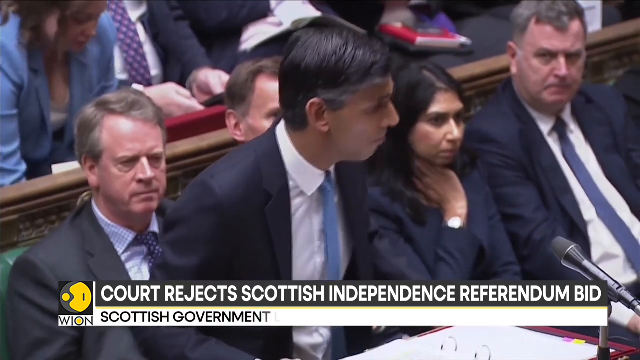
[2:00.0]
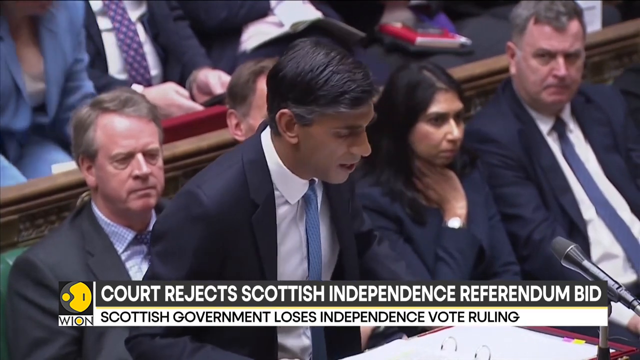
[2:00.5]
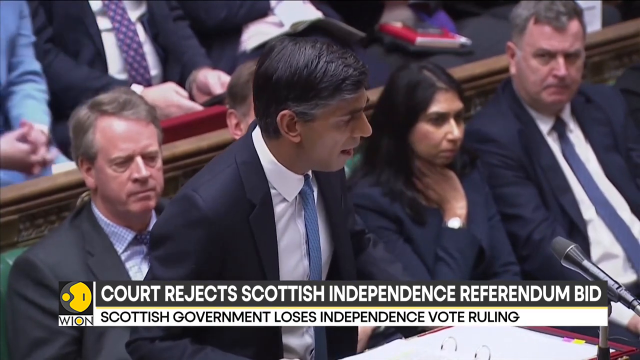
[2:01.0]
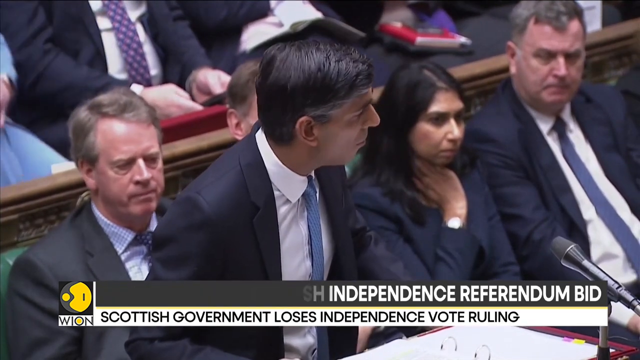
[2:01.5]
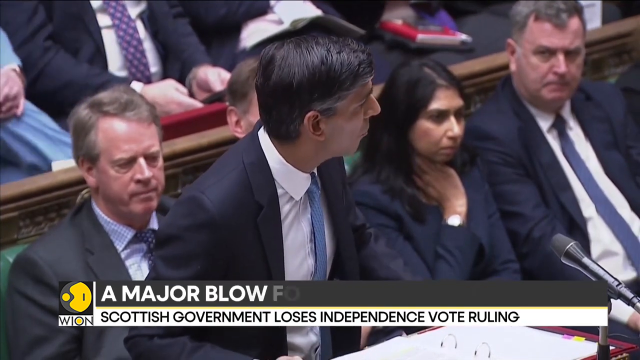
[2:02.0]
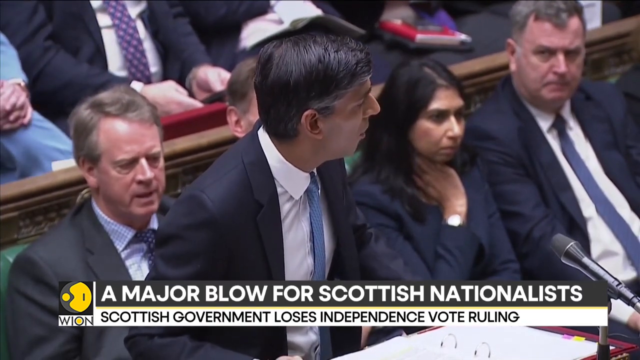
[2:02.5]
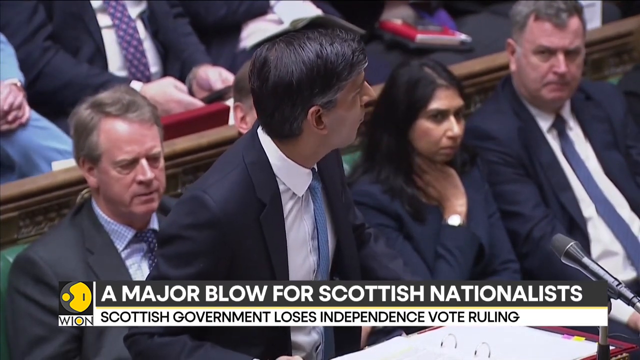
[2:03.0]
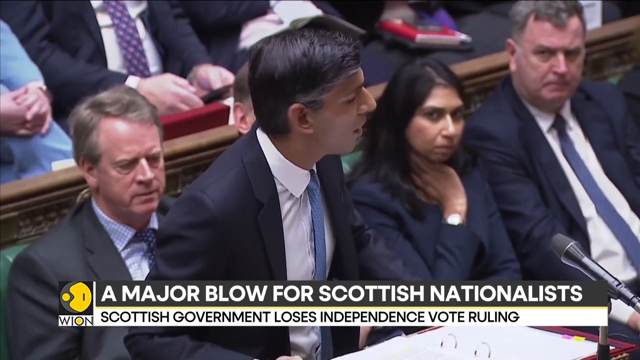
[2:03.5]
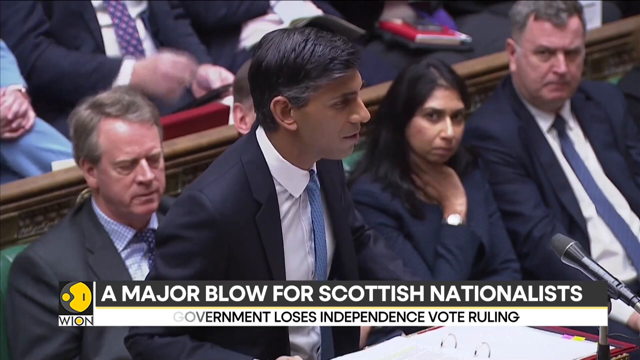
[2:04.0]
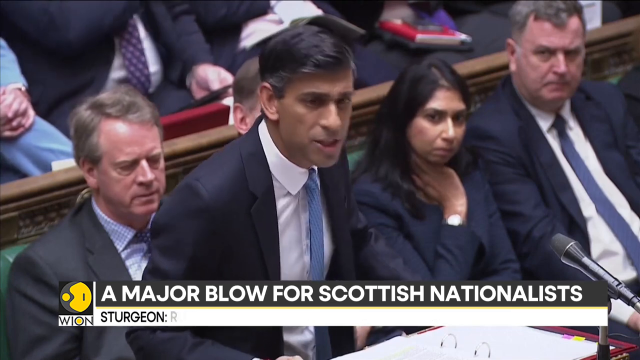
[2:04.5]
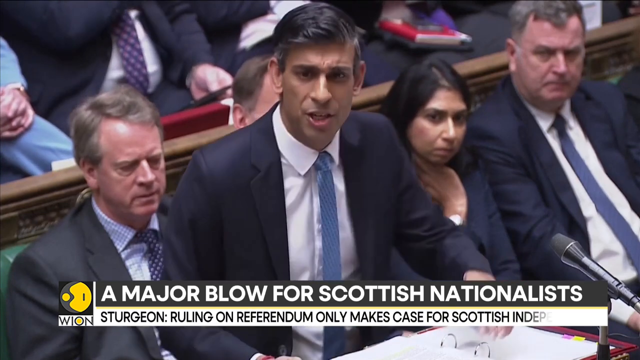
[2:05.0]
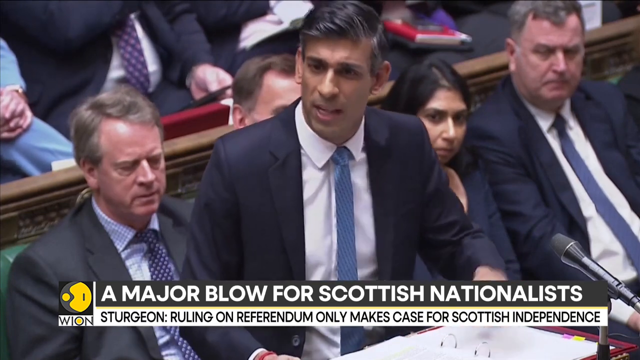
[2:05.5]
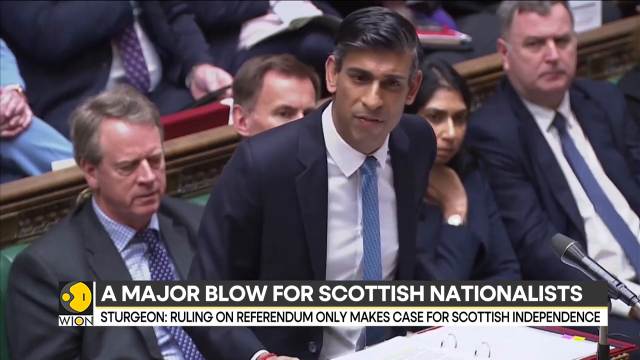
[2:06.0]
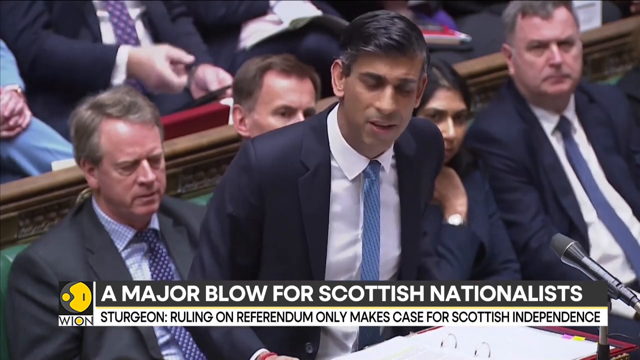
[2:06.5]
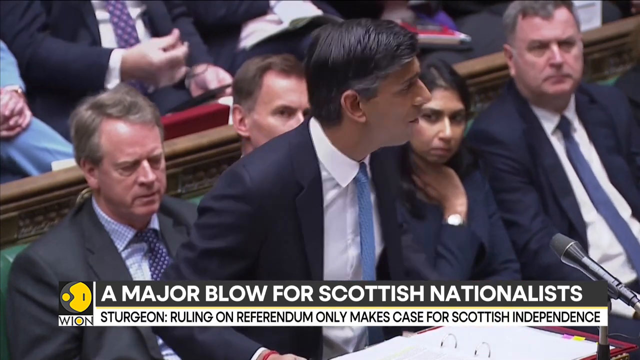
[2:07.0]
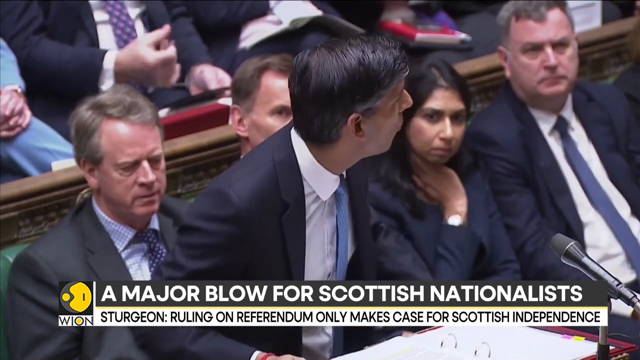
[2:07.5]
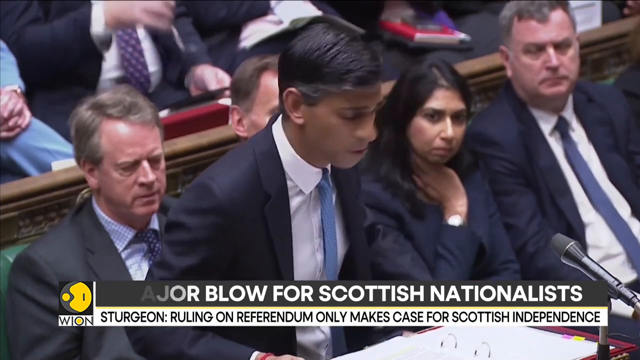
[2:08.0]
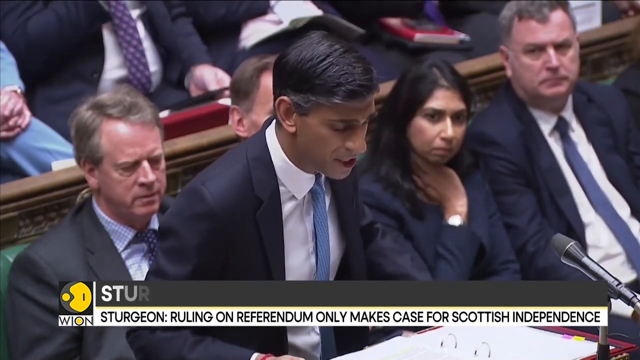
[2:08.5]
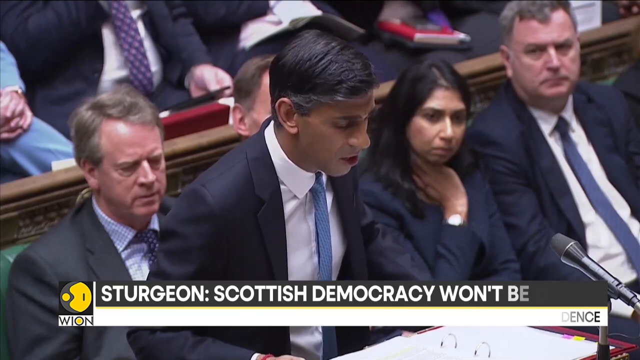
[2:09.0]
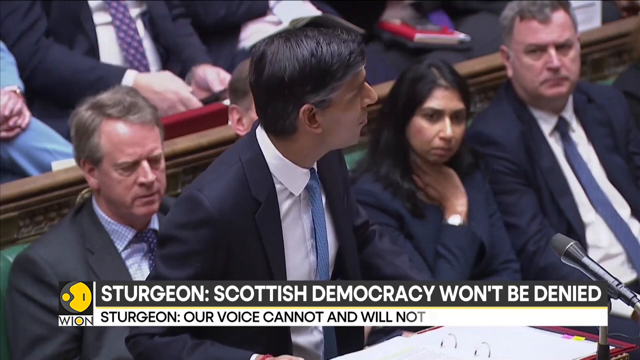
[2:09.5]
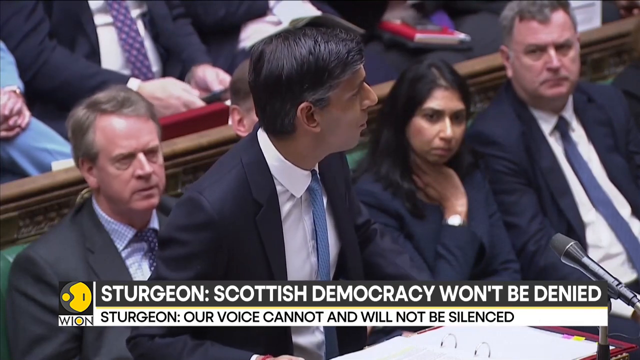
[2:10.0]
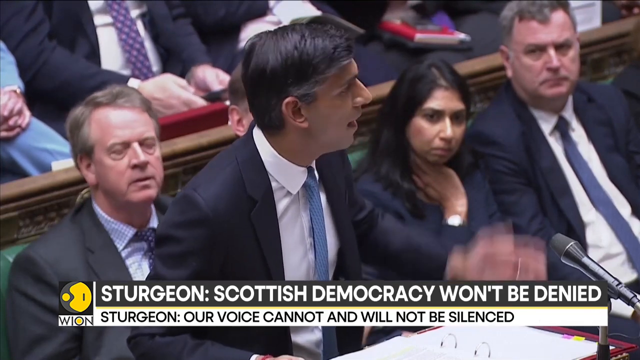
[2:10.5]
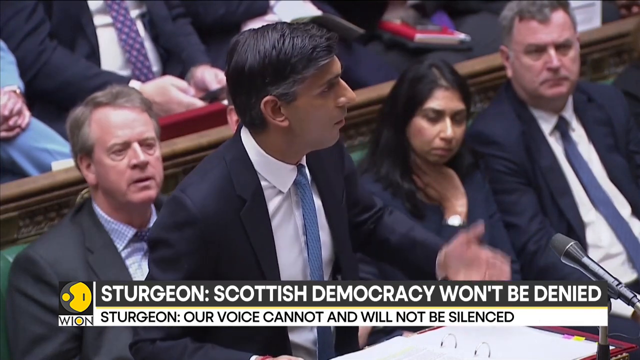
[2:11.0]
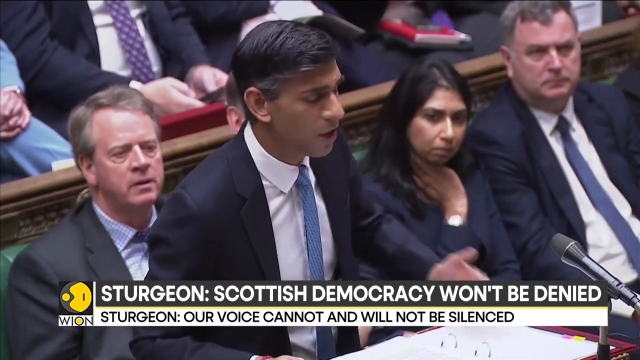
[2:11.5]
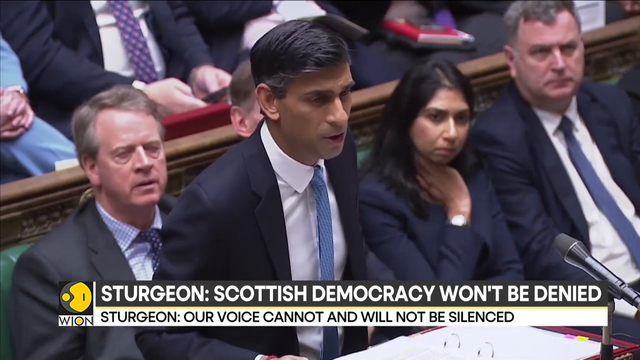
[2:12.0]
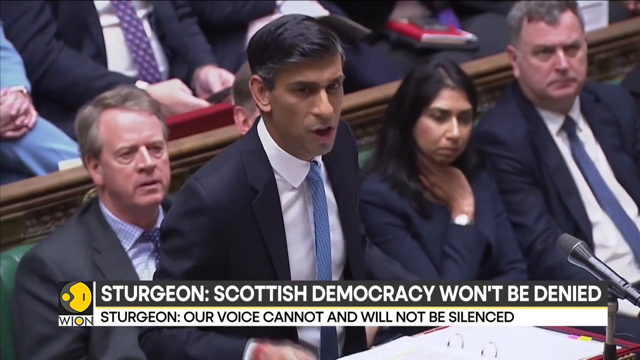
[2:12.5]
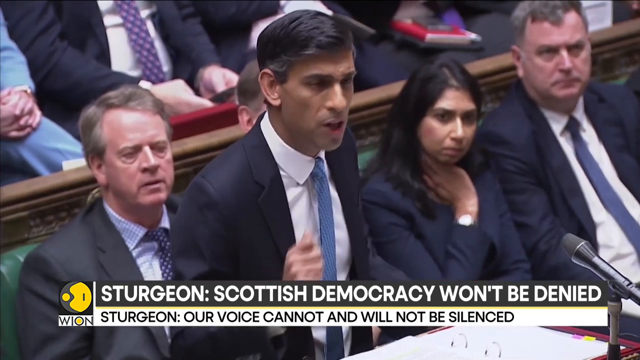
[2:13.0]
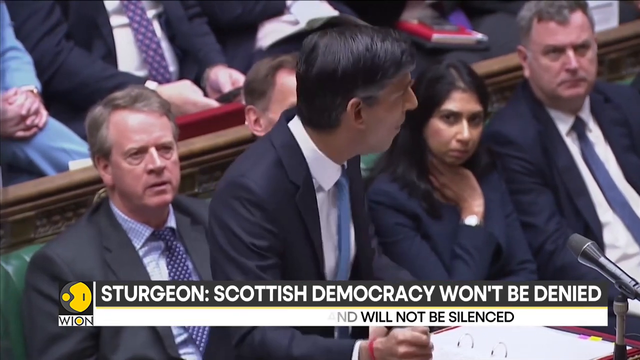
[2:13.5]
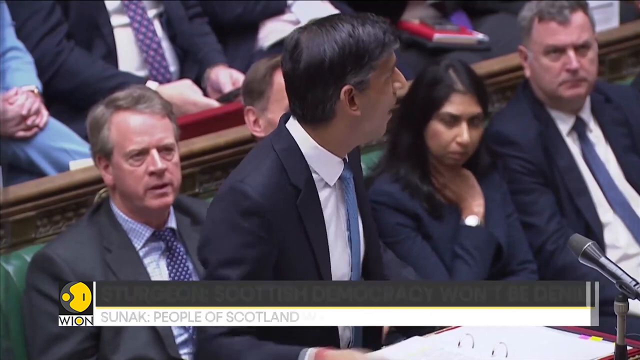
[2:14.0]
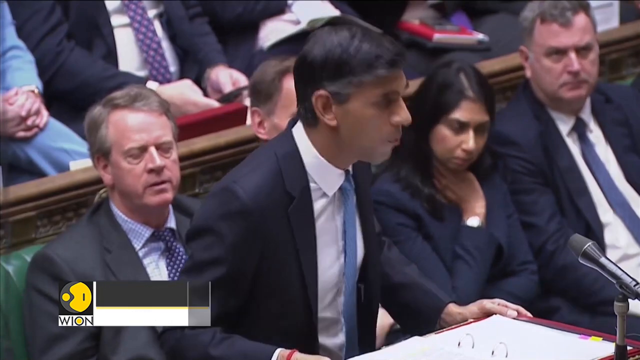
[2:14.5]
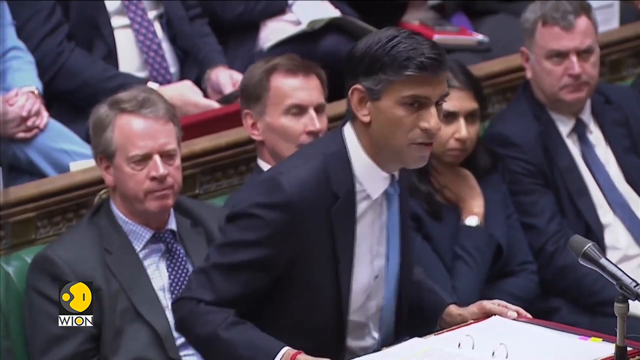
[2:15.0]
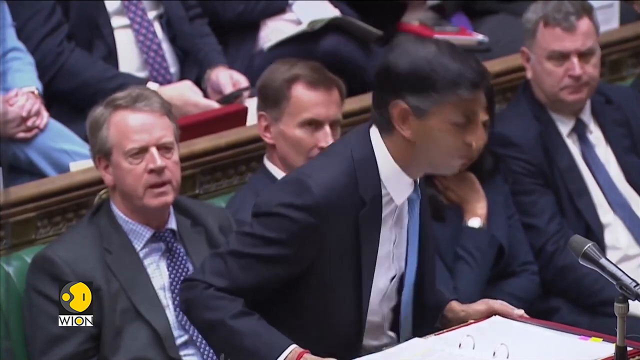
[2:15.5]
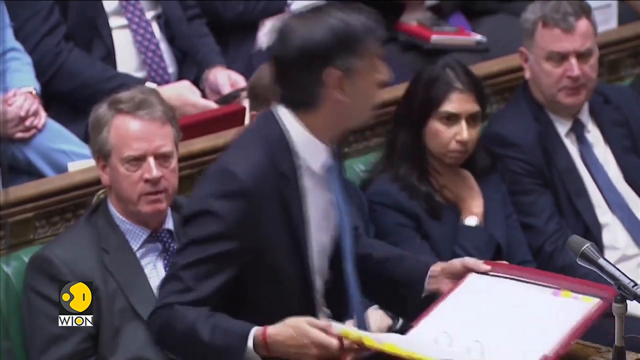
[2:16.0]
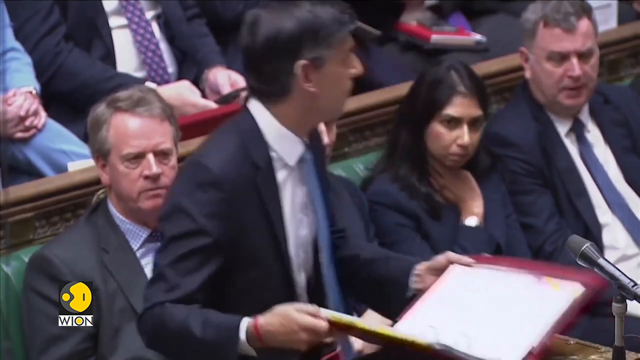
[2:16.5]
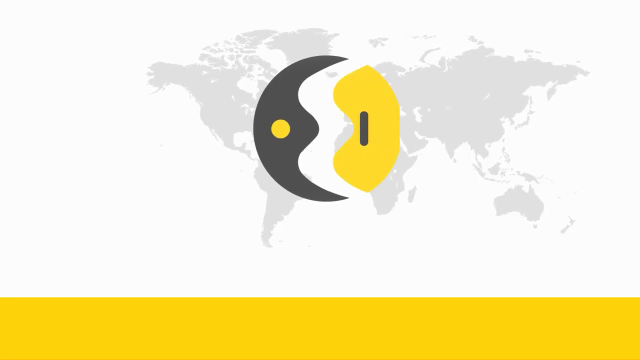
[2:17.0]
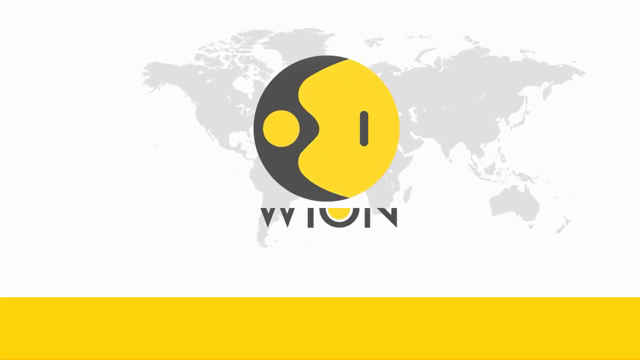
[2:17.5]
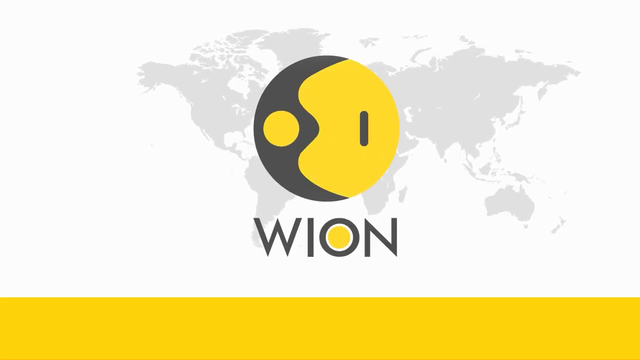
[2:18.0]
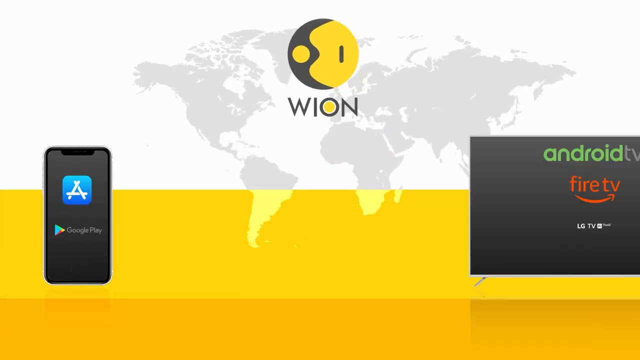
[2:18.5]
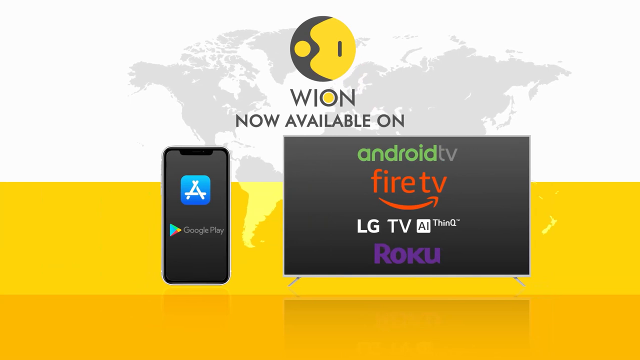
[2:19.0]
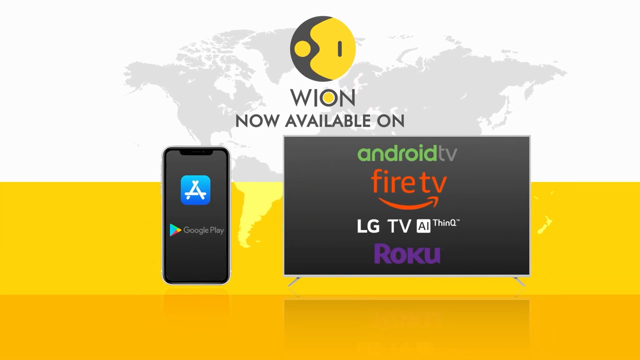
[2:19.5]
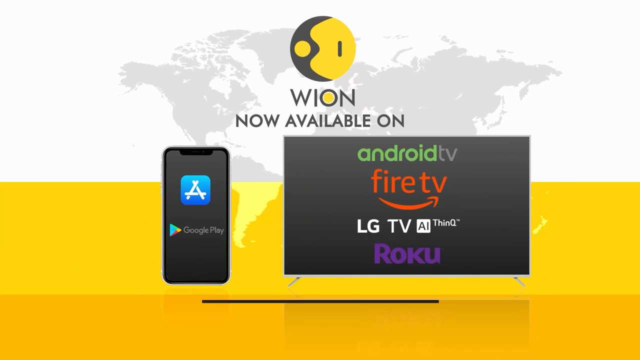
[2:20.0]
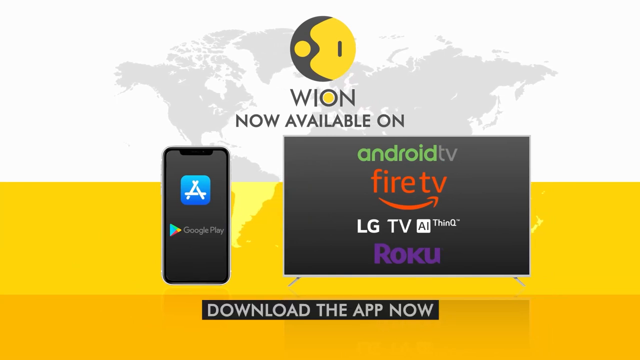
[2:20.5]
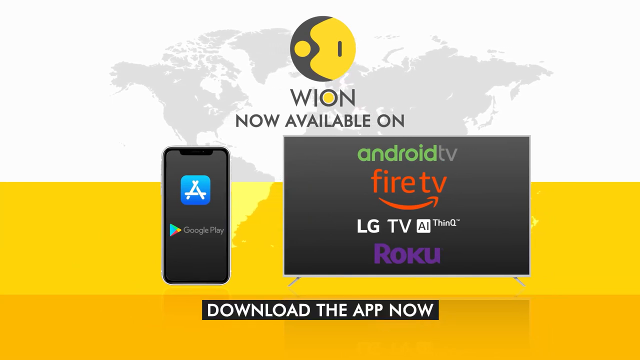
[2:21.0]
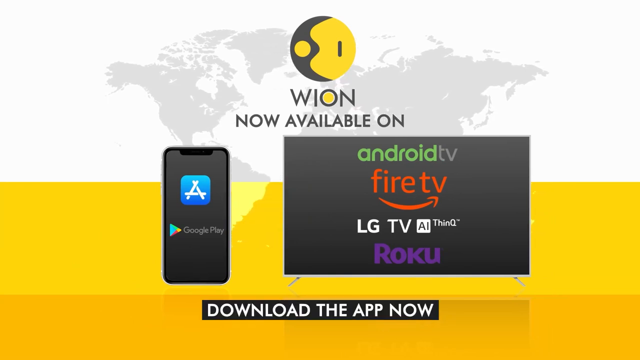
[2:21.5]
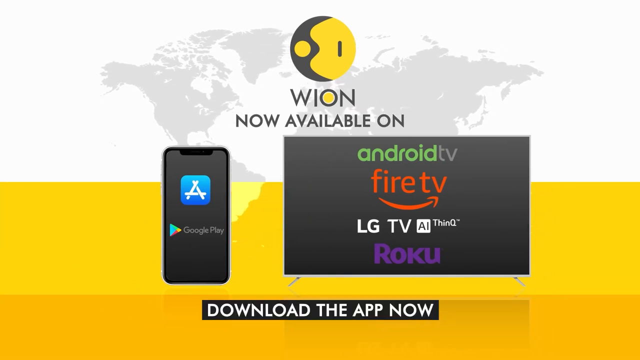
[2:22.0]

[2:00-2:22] Sunak continues to talk passionately, nodding his head, and it seems some people are in agreement. The video then ends with a logo that looks like a sun and a moon combined, named WION. Finally, text reads "we are now available on Apple Google Play Android TV Firefly TV LG Roku."